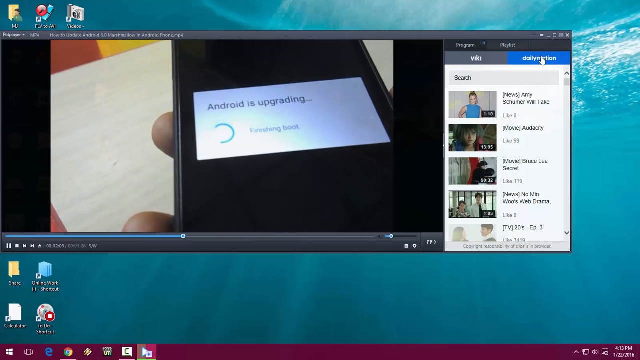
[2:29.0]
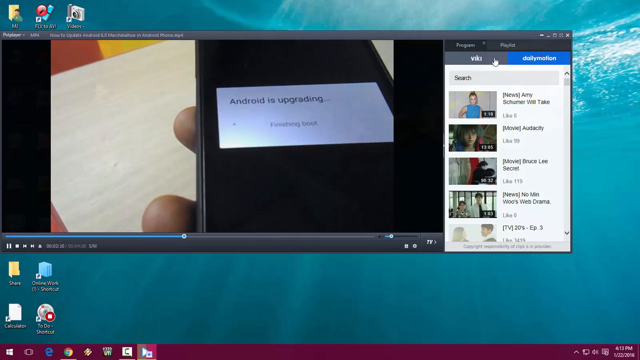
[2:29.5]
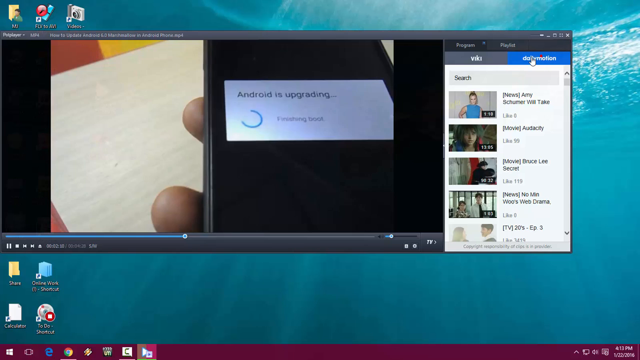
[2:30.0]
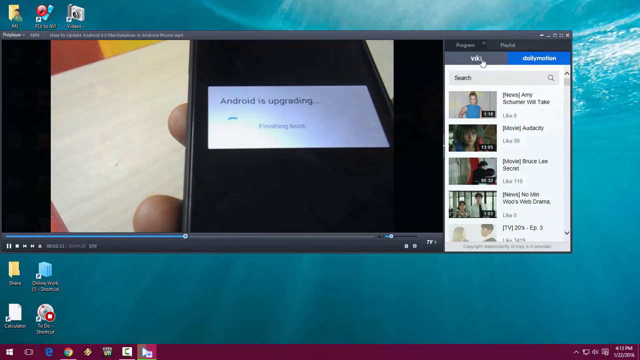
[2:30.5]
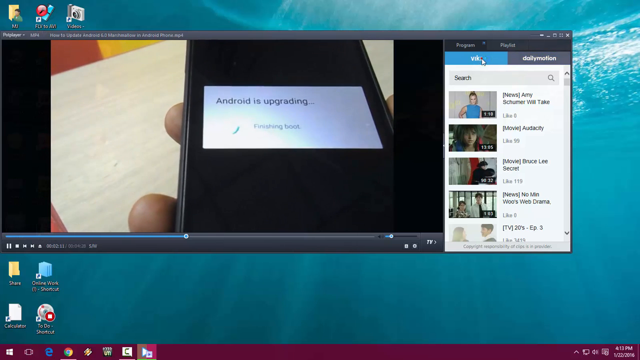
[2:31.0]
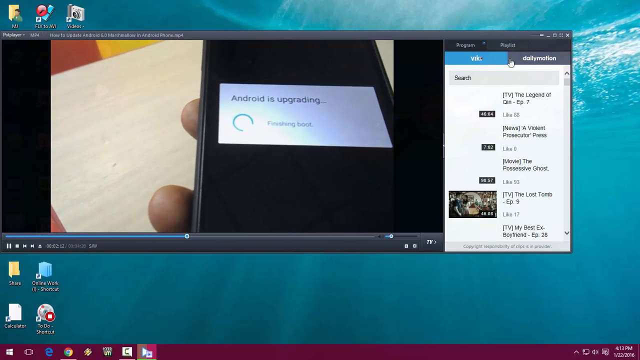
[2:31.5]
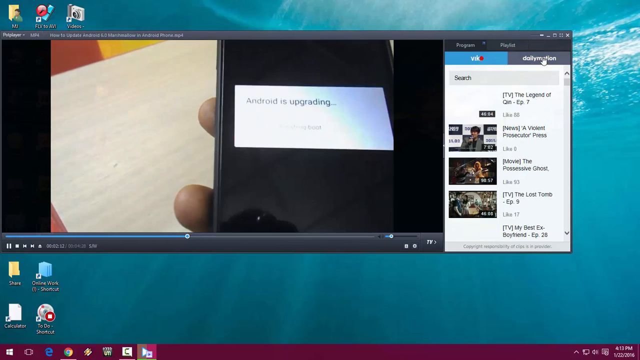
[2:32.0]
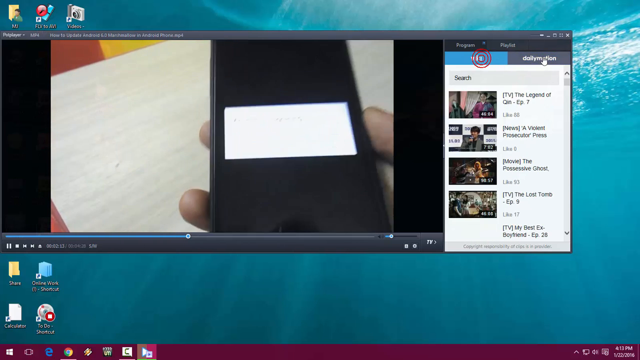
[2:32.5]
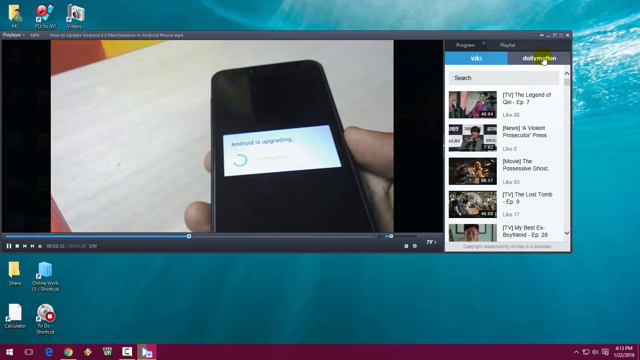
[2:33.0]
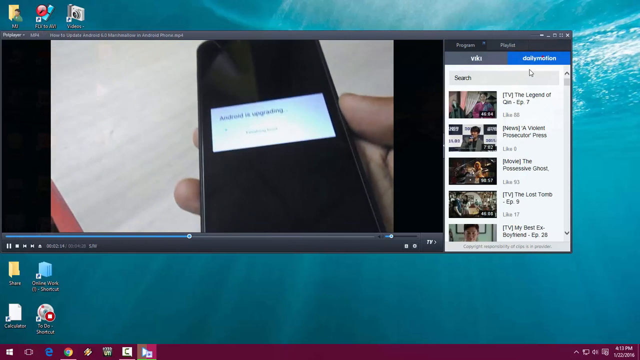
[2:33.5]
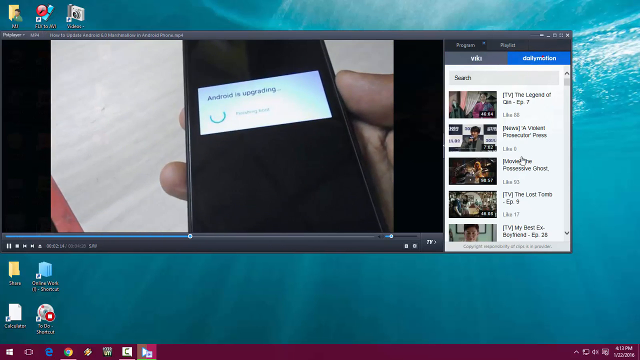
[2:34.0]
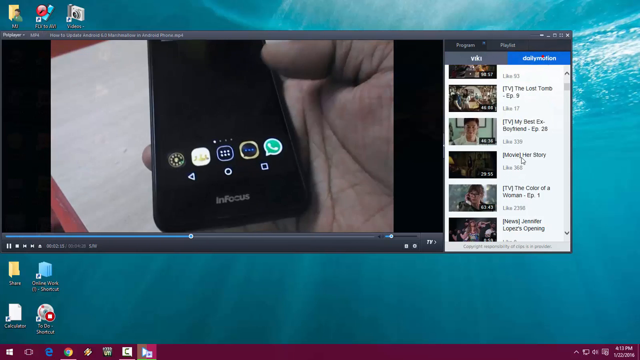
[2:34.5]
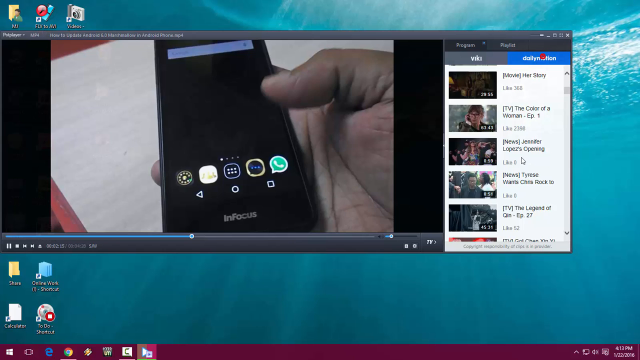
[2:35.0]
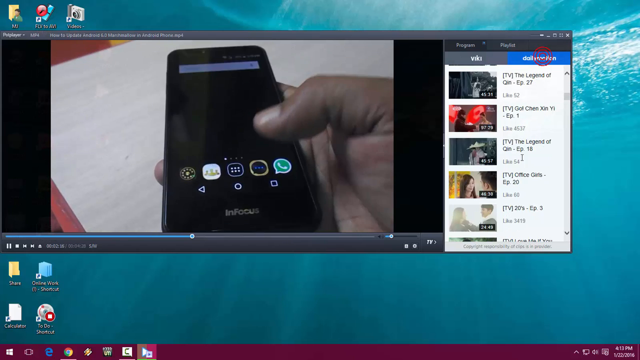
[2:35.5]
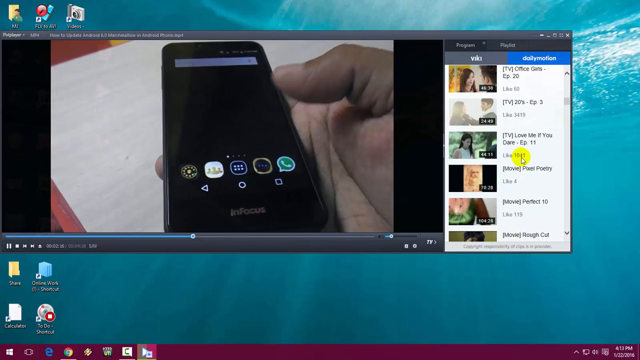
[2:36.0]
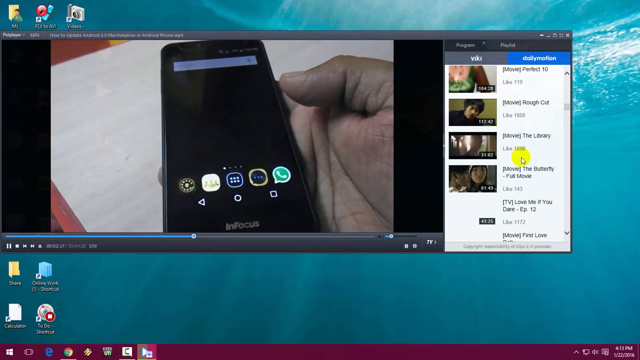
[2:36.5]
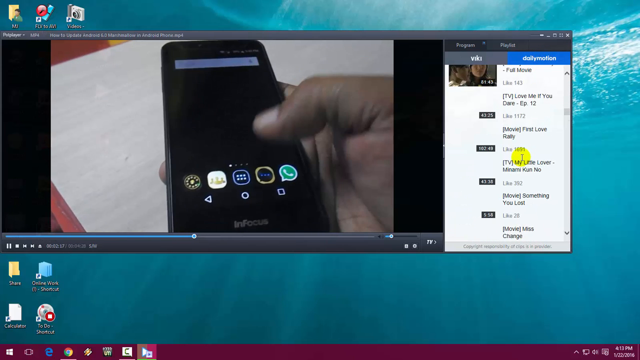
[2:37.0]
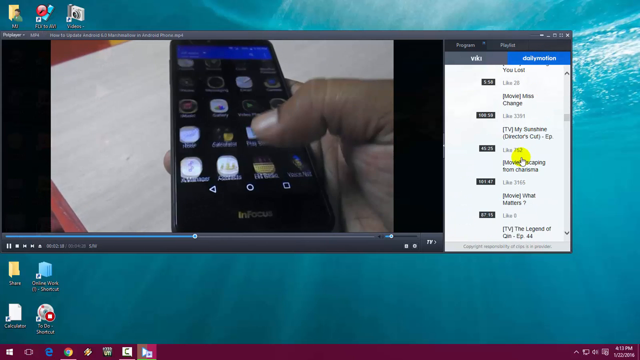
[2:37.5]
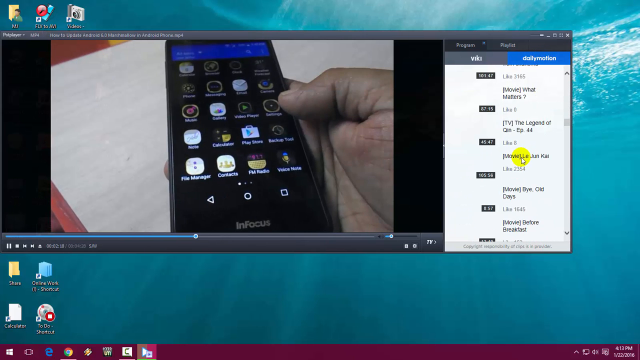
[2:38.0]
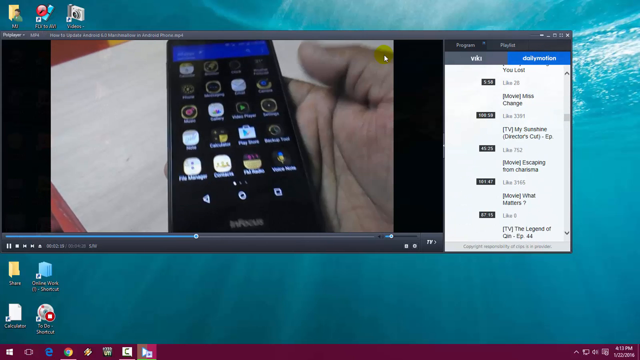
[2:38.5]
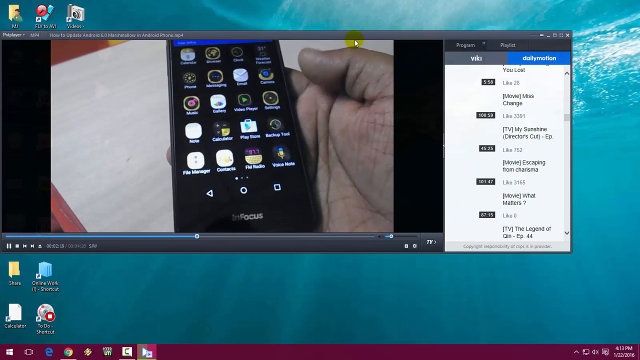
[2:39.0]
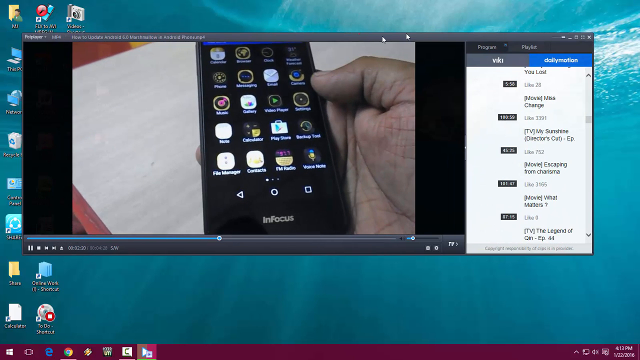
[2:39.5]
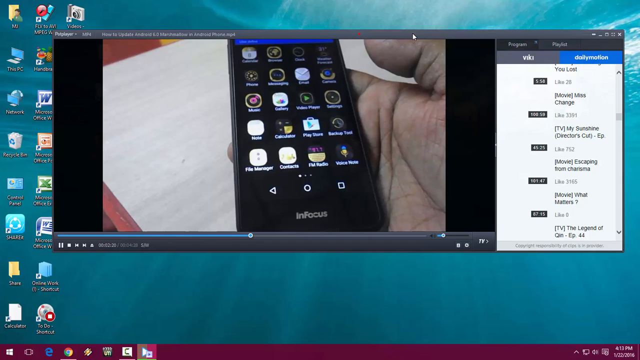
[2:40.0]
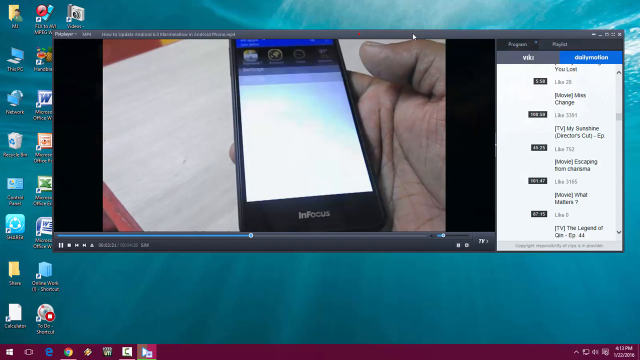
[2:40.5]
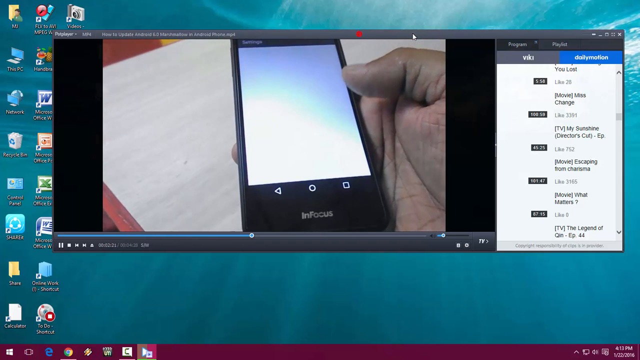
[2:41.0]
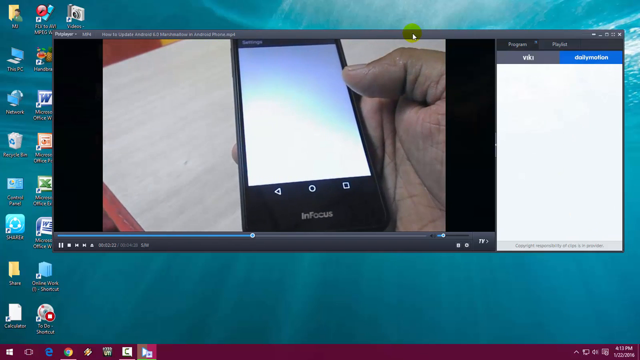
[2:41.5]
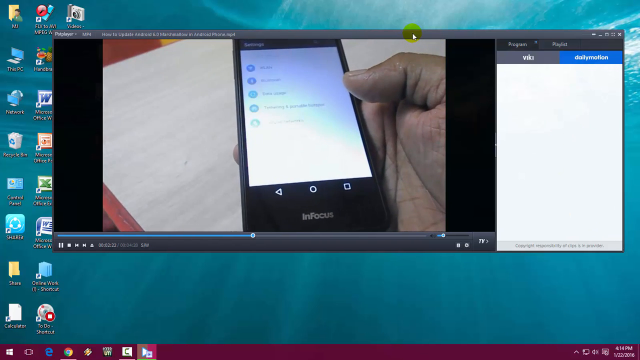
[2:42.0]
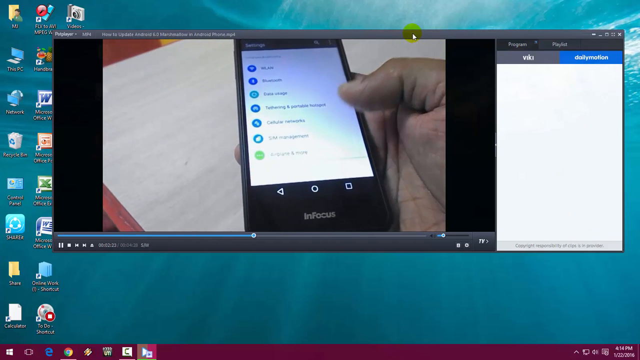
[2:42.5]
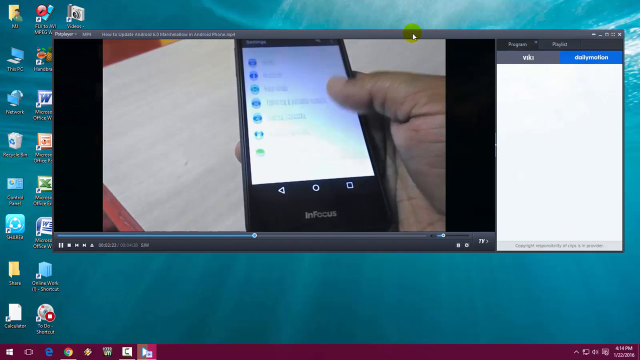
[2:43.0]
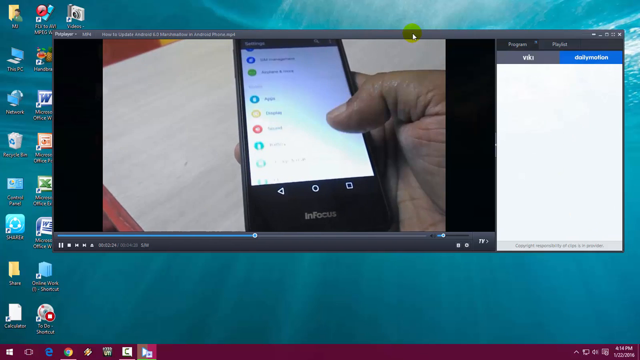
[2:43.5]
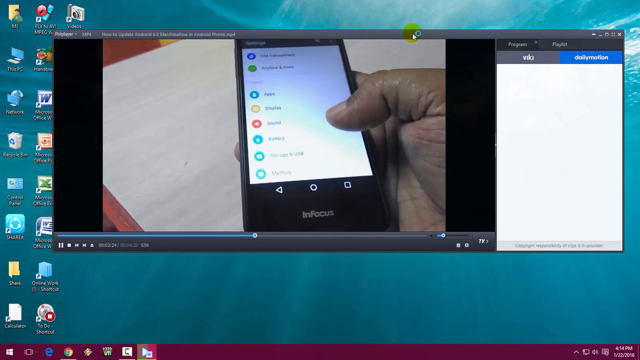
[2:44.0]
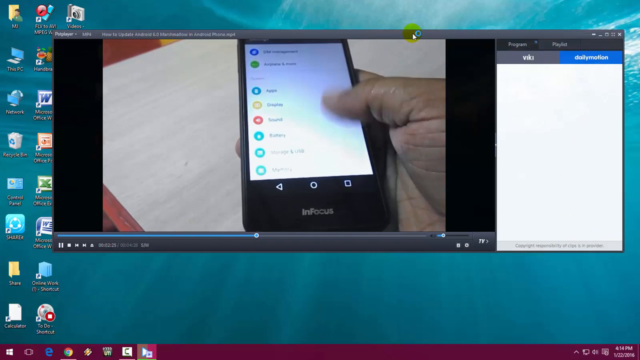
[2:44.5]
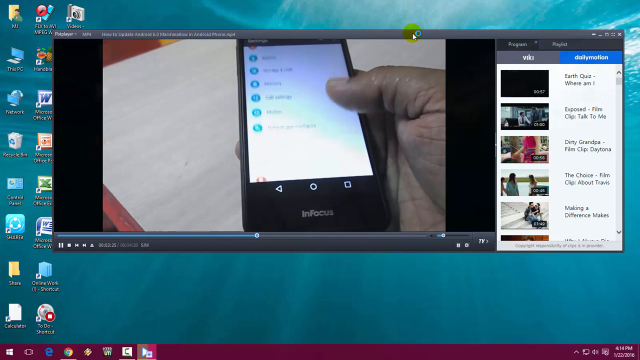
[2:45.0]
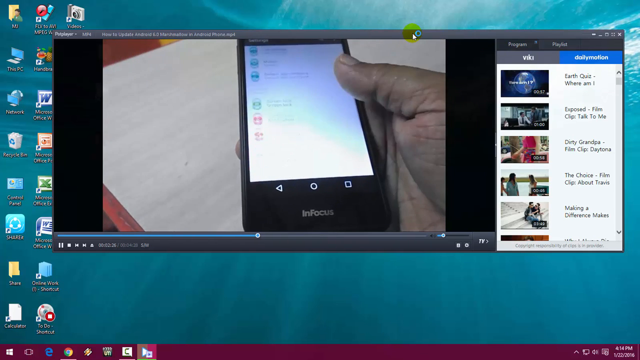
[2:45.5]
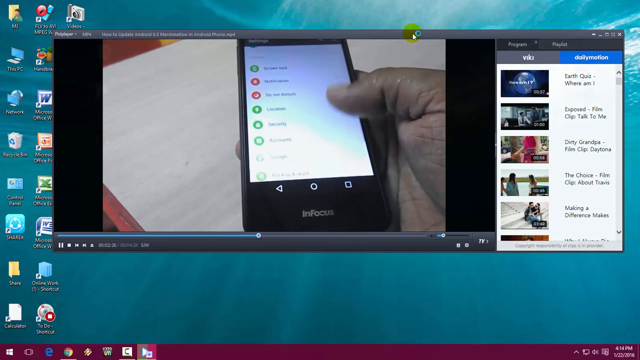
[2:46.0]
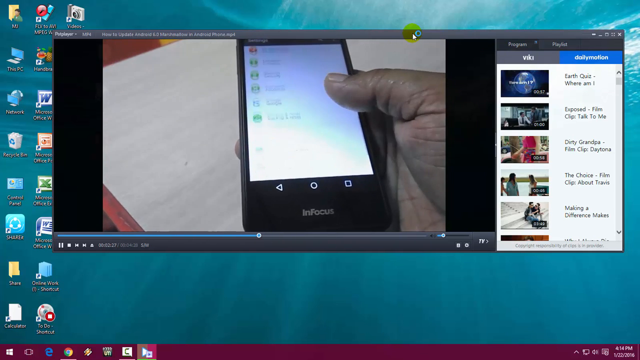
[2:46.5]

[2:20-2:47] The screen stays black for about 10 seconds. A desktop screen then comes up with a video playing in the PotPlayer video player, showing someone looking at their phone screen, which has a rectangular box that says "Android is upgrading". On the right side are video suggestions, seemingly with two tabs, one saying "VK" and one saying "daily motion", and underneath a search box and a list of other recommended videos. The VK option is clicked, changing the videos shown, then the daily motion option is clicked, and the list of recommended videos is scrolled down; the video thumbnail images take a little time to load. The cursor then selects the top of the PotPlayer window and kind of drags it a little to the right so it is more centered on the screen. In the playing video, a settings screen is shown on the smartphone and the user scrolls down through the settings options.